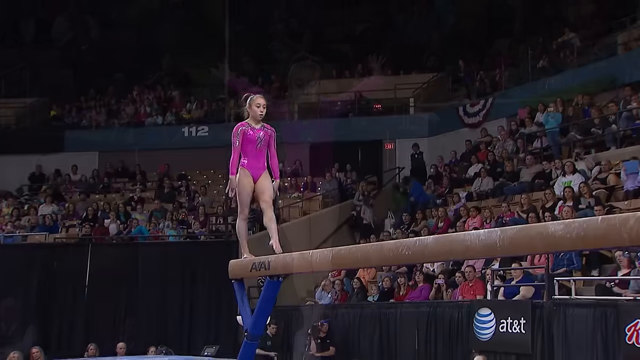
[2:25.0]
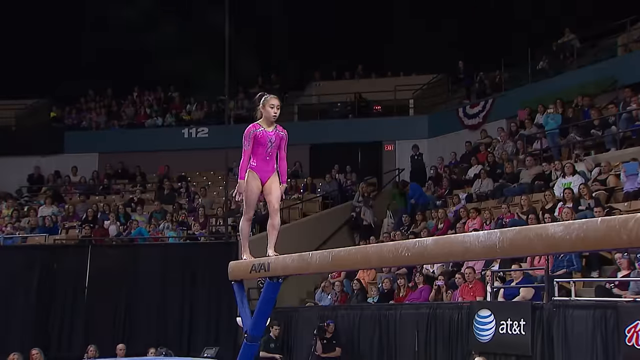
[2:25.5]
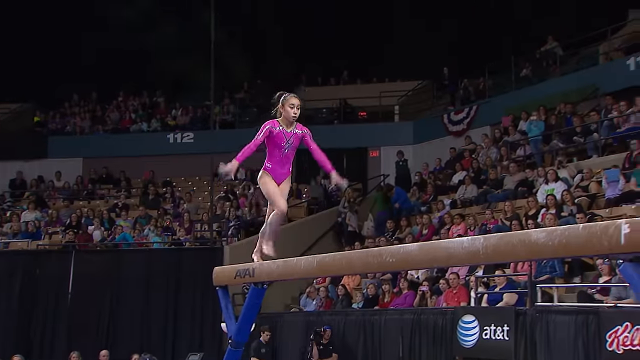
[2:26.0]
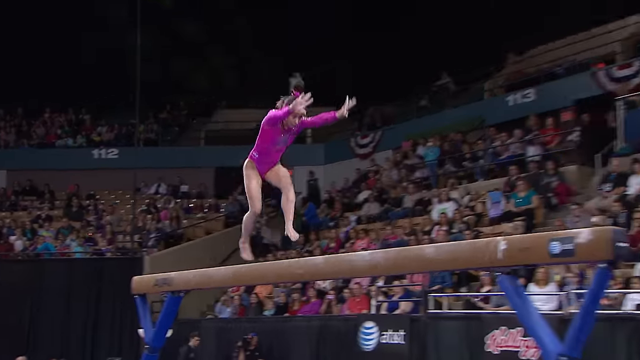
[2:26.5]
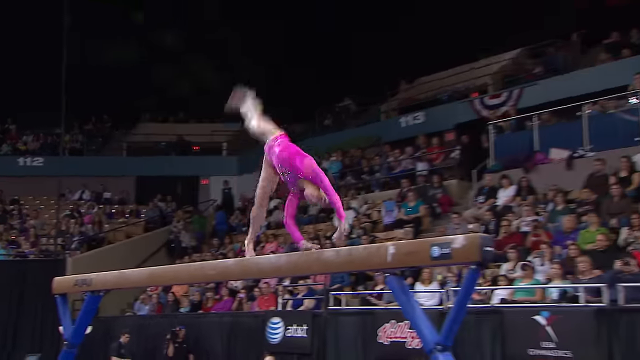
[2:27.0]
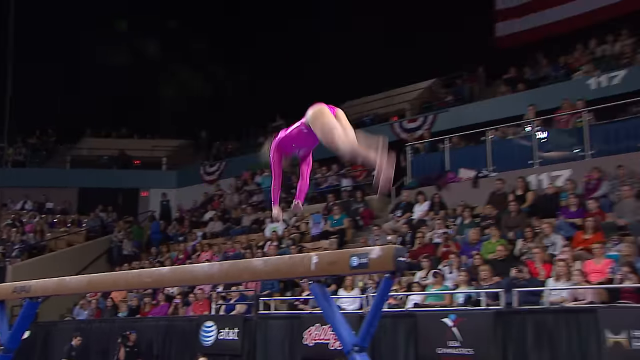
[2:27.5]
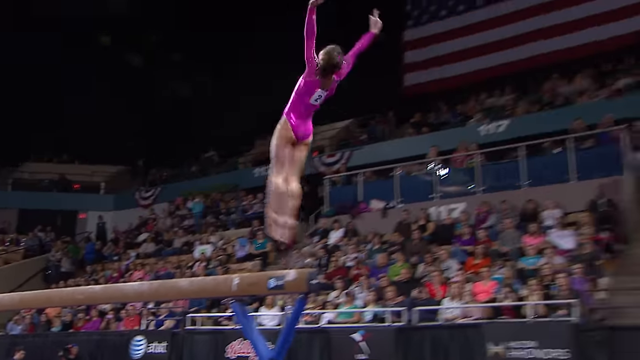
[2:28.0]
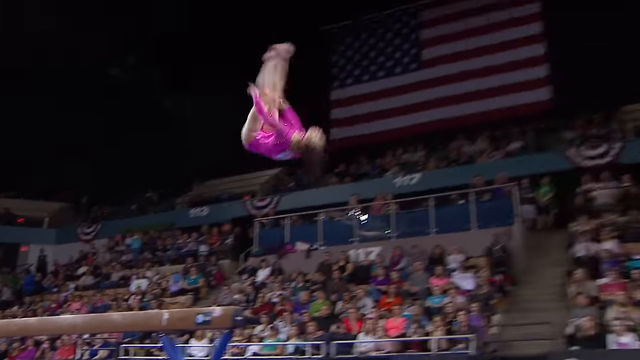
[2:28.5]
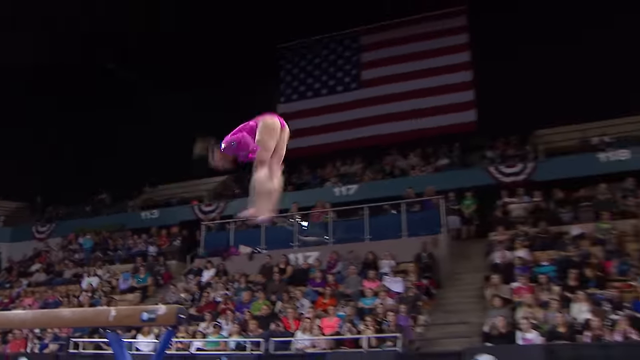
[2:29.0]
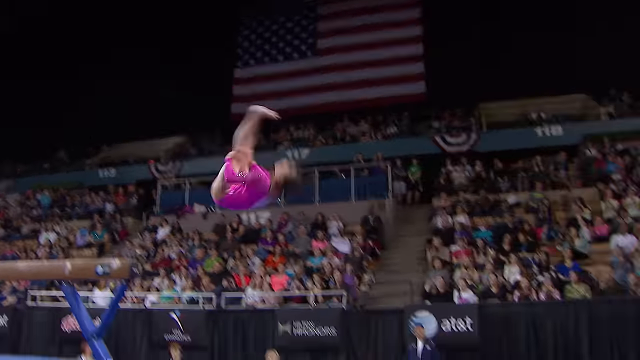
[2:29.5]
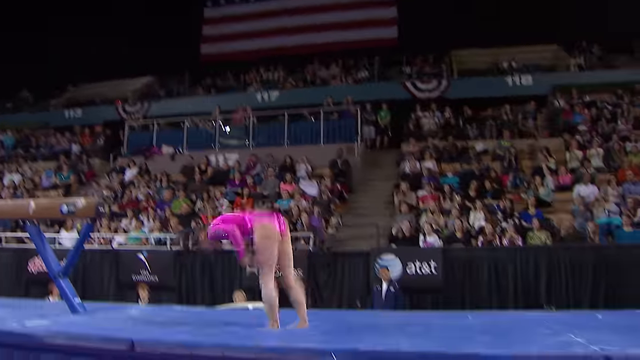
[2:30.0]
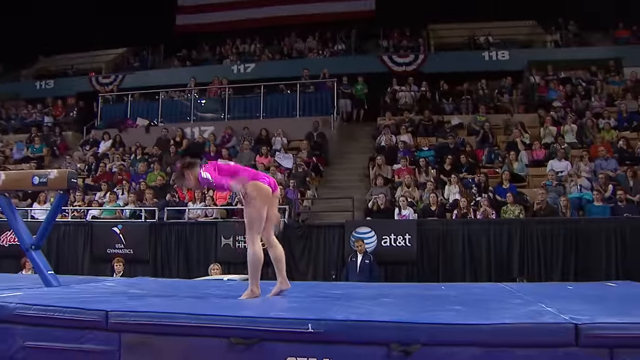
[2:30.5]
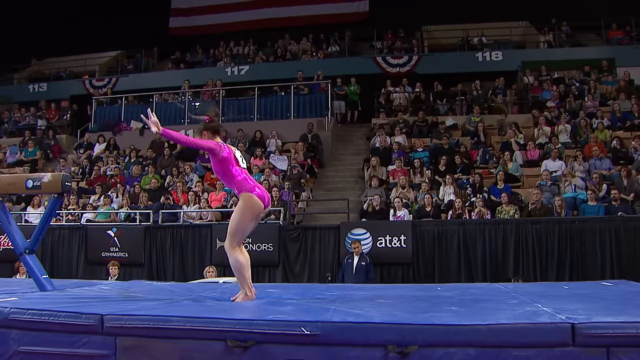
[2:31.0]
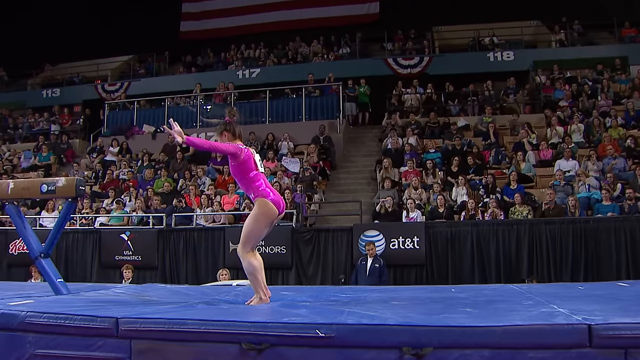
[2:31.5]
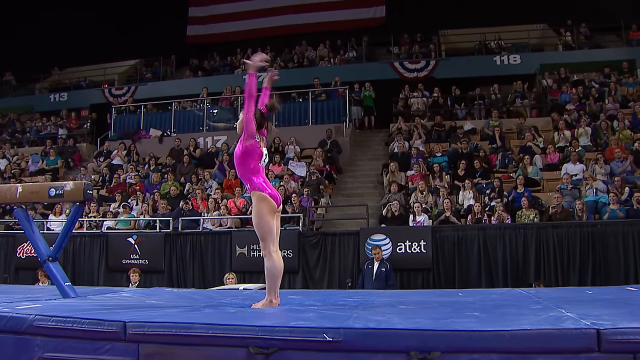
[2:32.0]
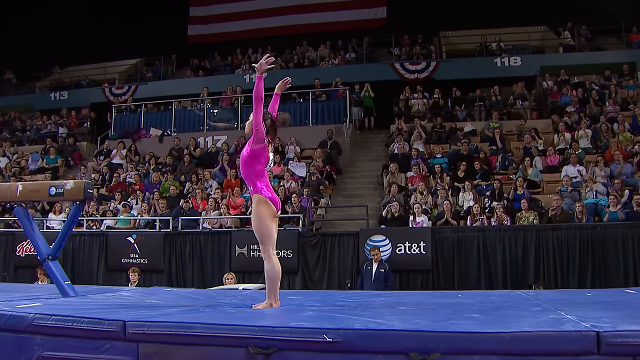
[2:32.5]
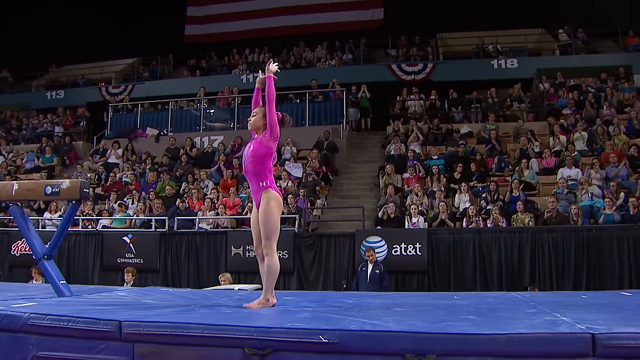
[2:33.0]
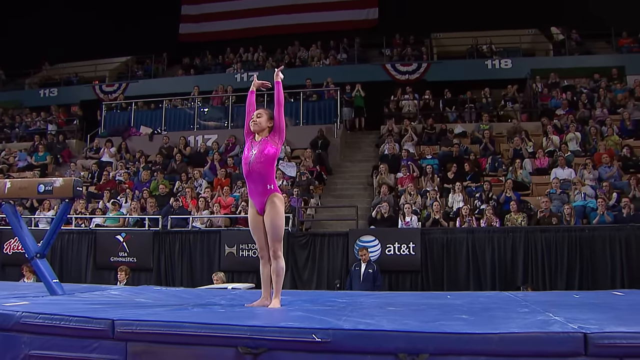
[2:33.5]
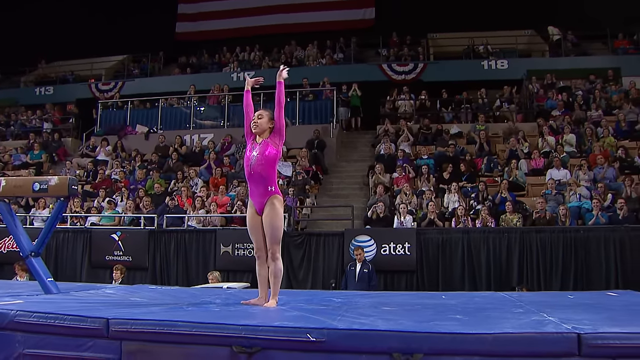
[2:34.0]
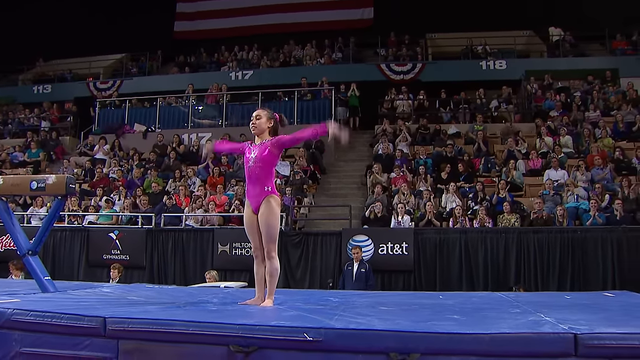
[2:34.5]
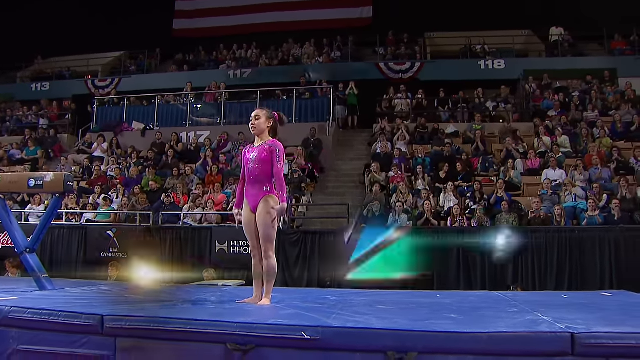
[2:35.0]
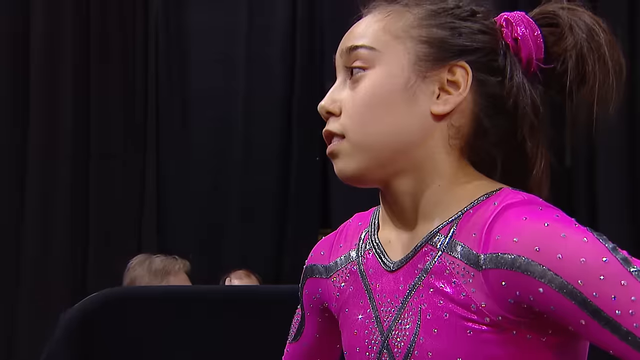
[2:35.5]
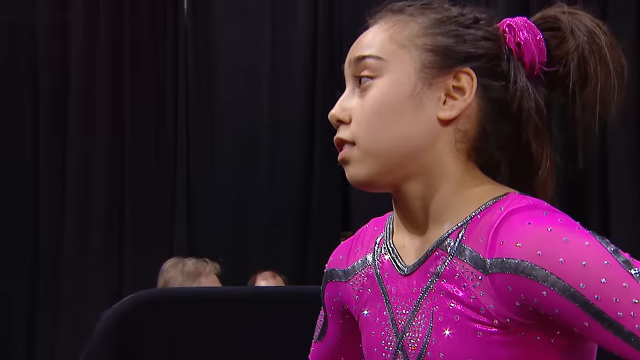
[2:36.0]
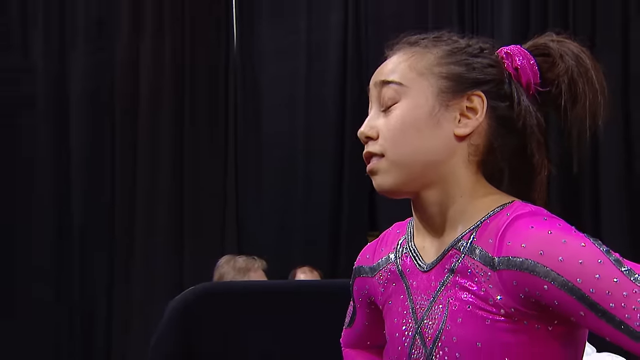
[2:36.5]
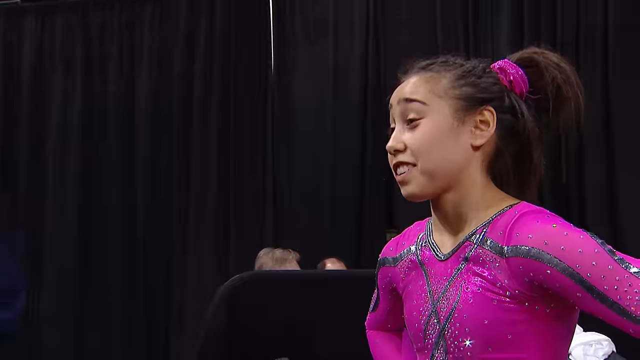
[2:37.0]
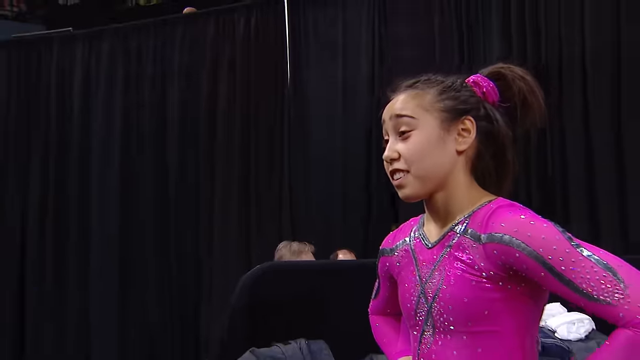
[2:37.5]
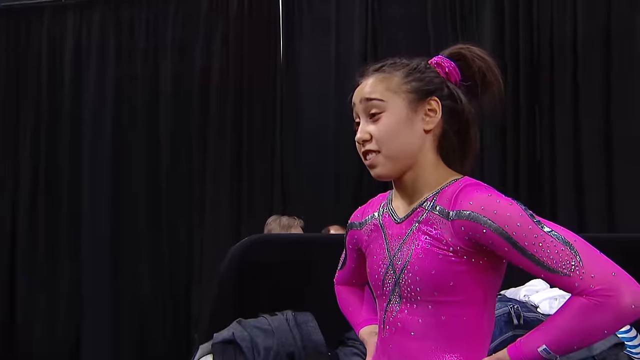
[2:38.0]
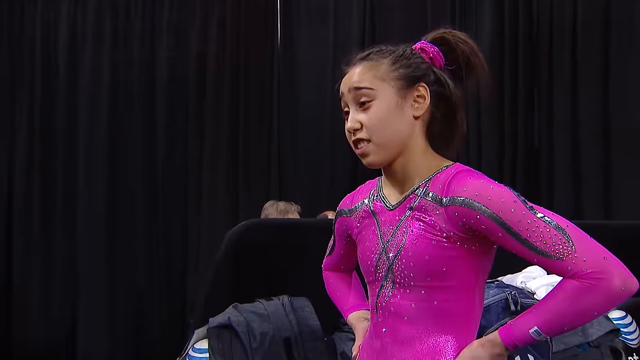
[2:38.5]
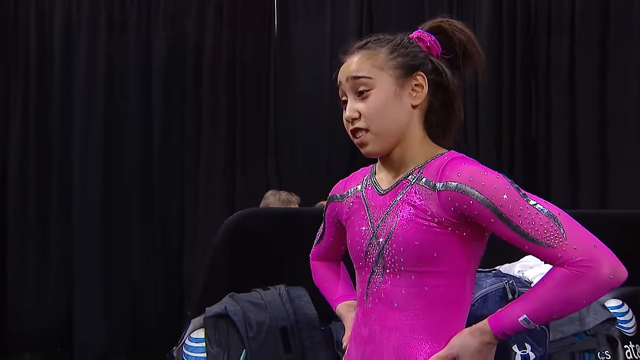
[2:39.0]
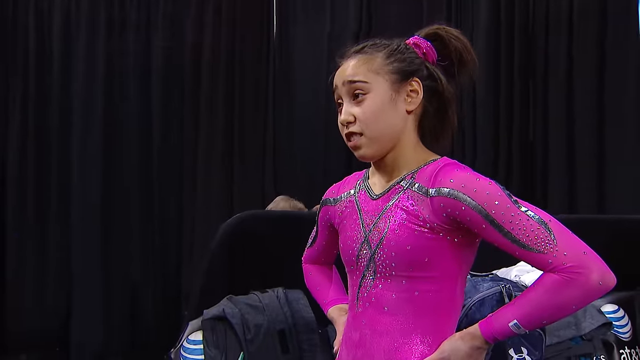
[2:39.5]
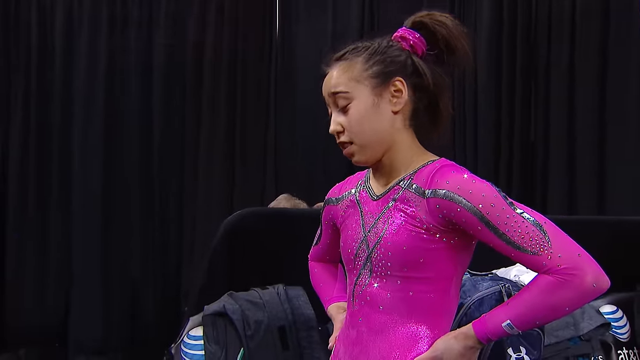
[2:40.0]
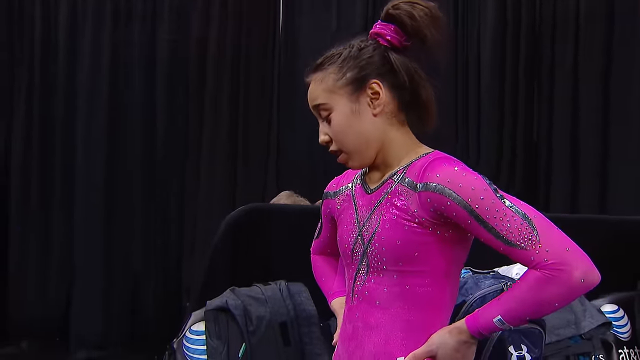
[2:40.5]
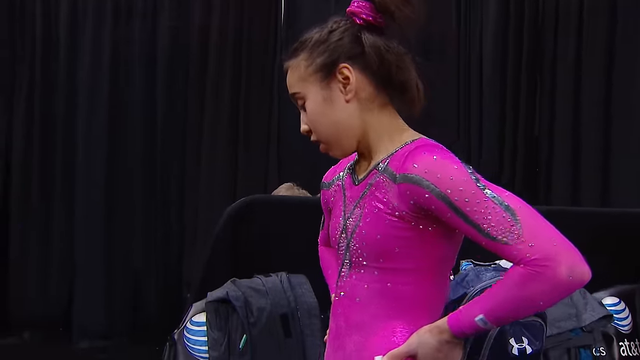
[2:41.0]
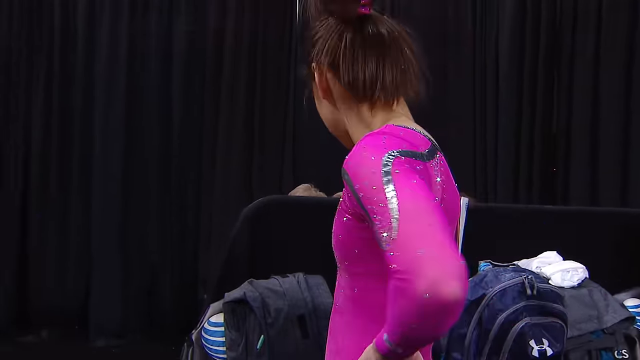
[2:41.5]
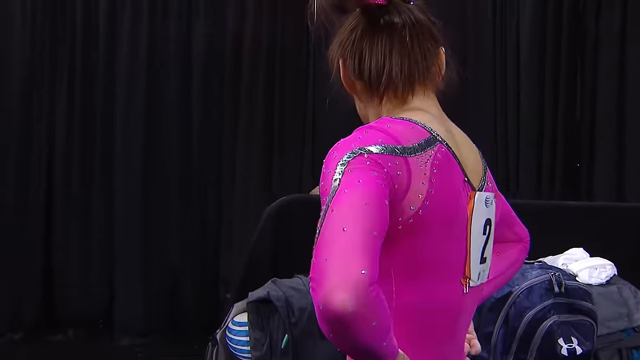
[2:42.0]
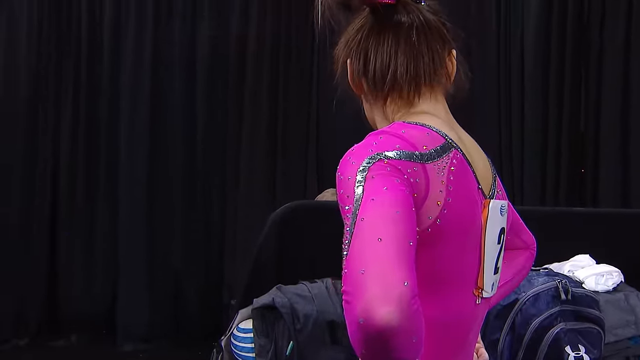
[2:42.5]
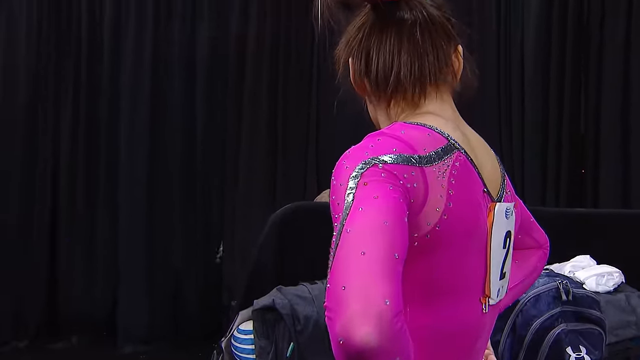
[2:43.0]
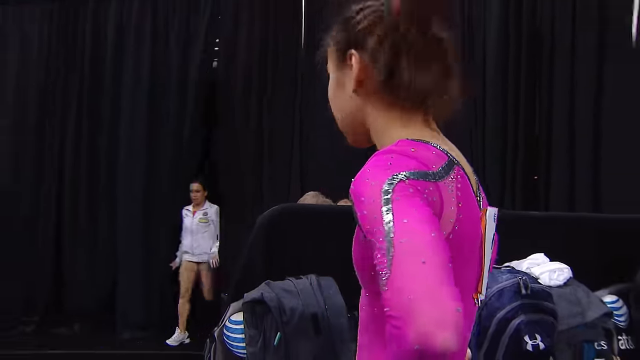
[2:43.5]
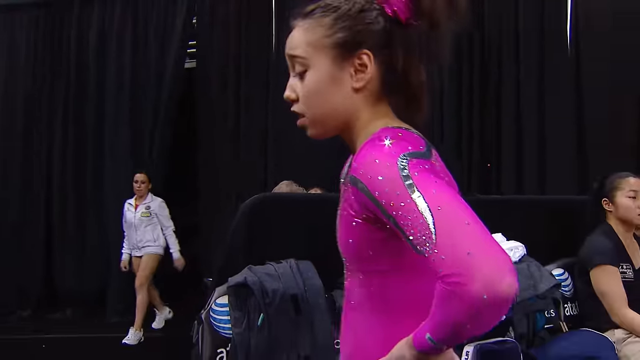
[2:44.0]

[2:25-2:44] The girl runs across the beam, plants her arms on it, does a somersault through the air, and lands on the mat. She is wearing a light purple gymnast outfit with a number 2 and a white paper on her back. When she lands she puts her arms in the air. Her hair is in a bun with a purple glittery string wrapped around the tail. At the end she appears tired; she is smiling and happy, then looks down at the ground and turns to the right. Someone in a white outfit walks through some curtains. The gymnast breathes heavily with her hands at her hips and turns to the right, where there are chairs, a backpack on a chair, and someone to the right.